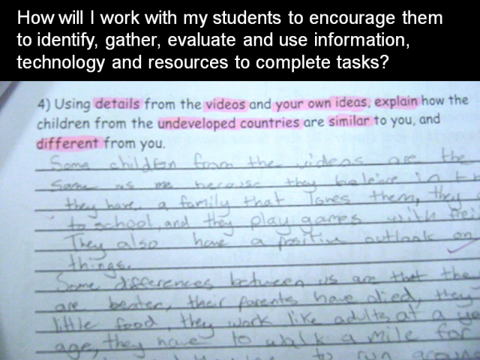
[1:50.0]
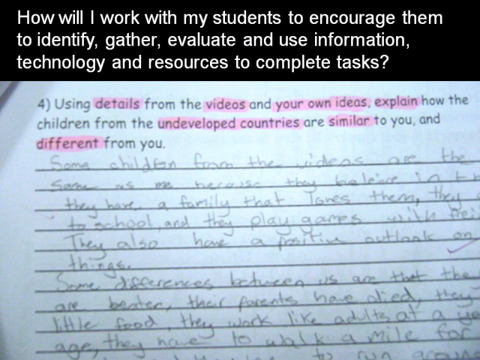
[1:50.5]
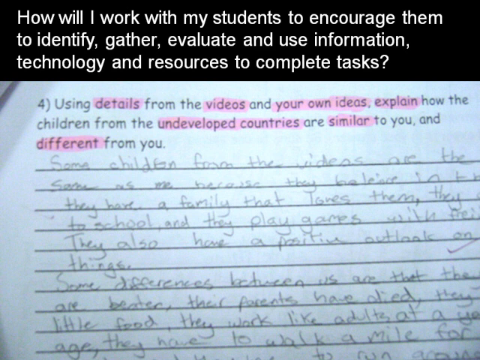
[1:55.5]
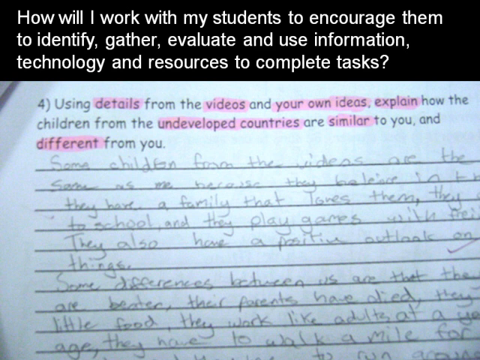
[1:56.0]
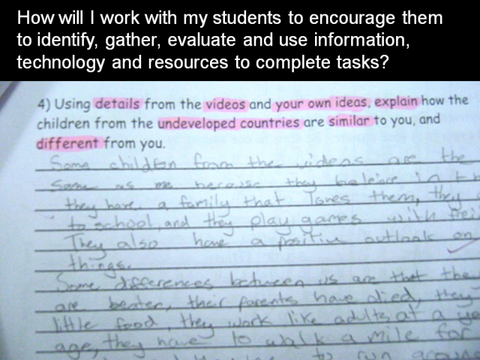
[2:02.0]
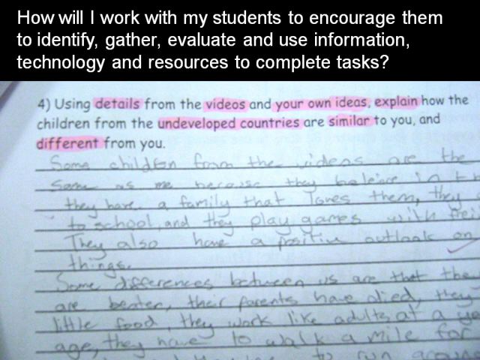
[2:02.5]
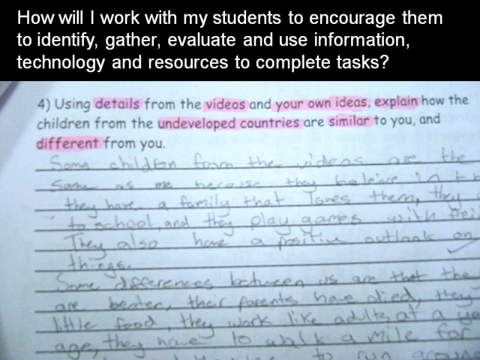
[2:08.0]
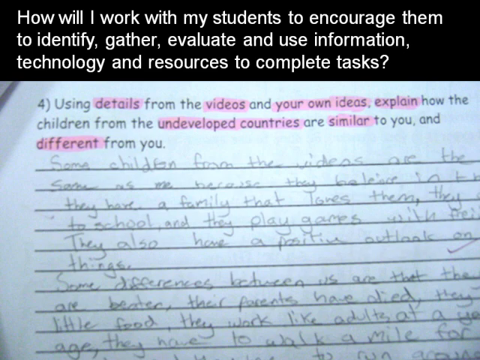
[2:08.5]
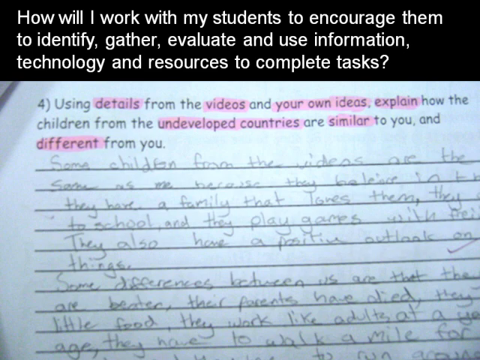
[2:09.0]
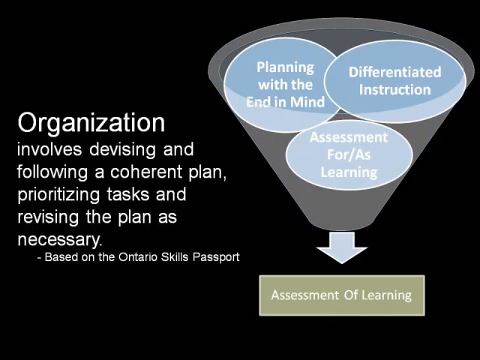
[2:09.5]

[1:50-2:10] A black rectangle at the top has white lettering that says "how will I work with my students to encourage them to identify, gather, evaluate, and use information, technology, and resources to complete tasks?" A question to a student reads "Using details from the videos and your own ideas, explain how the children from underdeveloped countries are similar to you and different from you." The child's answer is printed on the lines provided below the question. The screen then changes to a funnel-type chart that says "planning with the end in mind", a differentiated instruction item, and "assessment for" learning; the funnel leads down to an arrow and a rectangle reading "assessment of learning". Text says "organization involves devising and following a coherent plan, prioritizing tasks and revising the plan as necessary. Based on the Ontario Skills Passport."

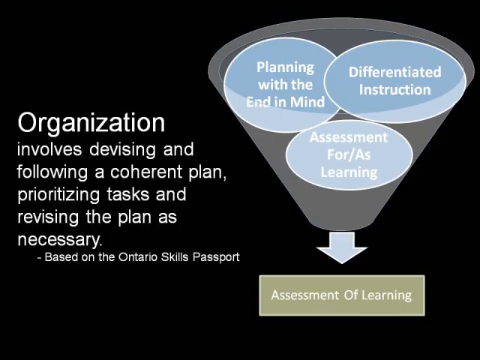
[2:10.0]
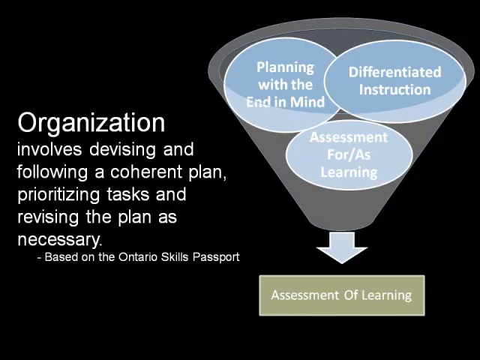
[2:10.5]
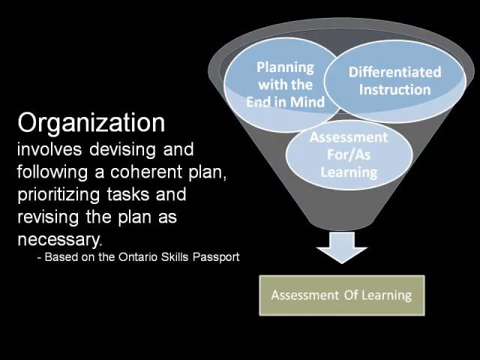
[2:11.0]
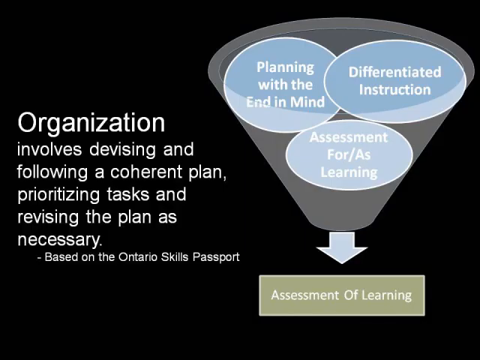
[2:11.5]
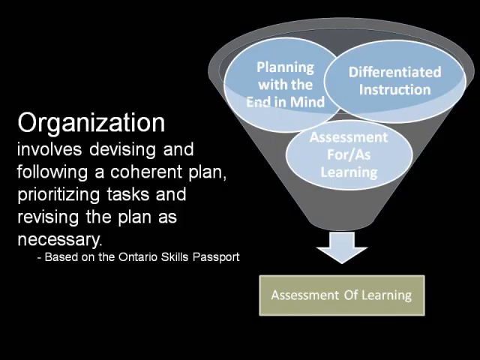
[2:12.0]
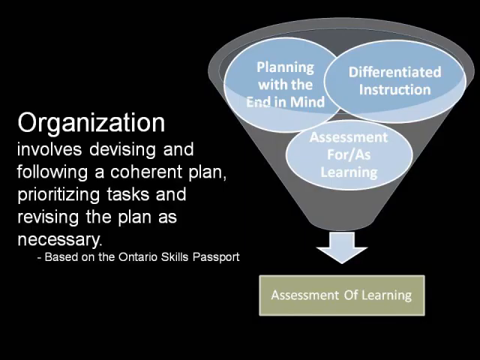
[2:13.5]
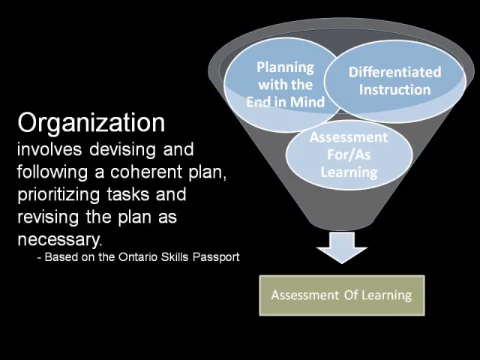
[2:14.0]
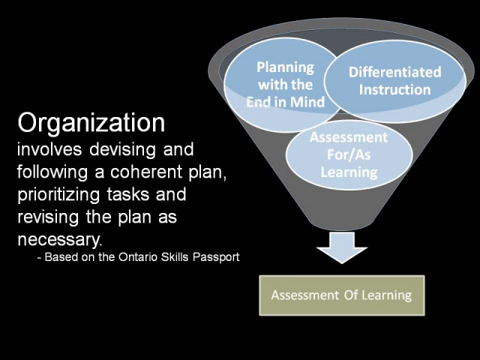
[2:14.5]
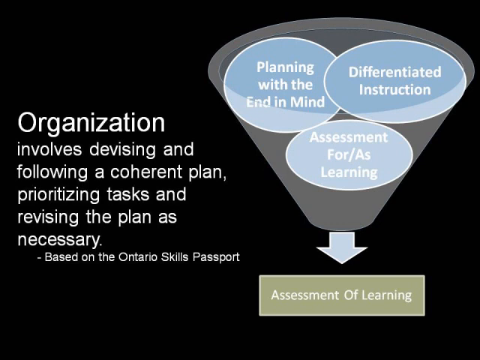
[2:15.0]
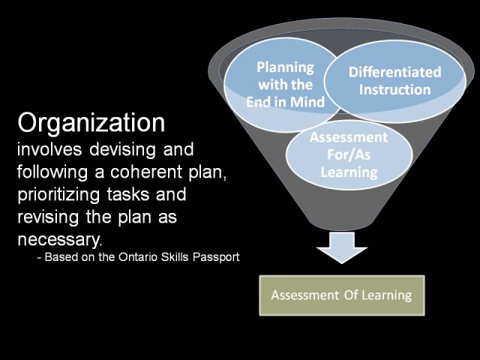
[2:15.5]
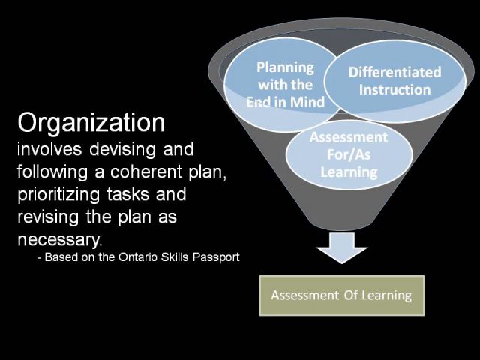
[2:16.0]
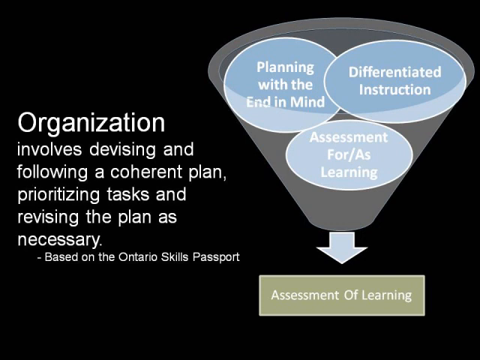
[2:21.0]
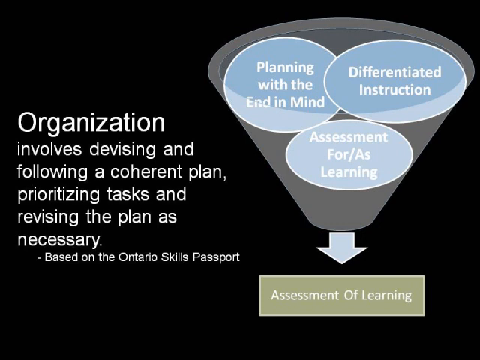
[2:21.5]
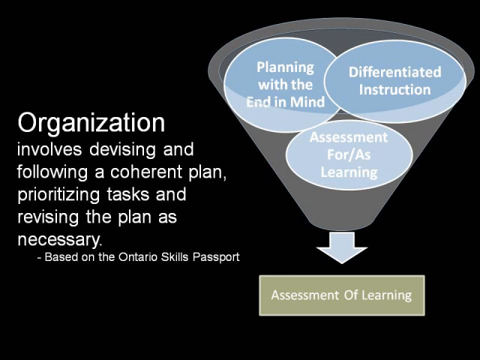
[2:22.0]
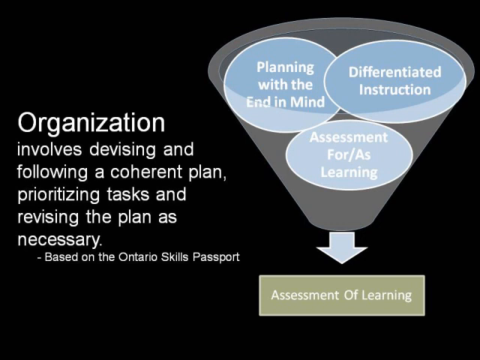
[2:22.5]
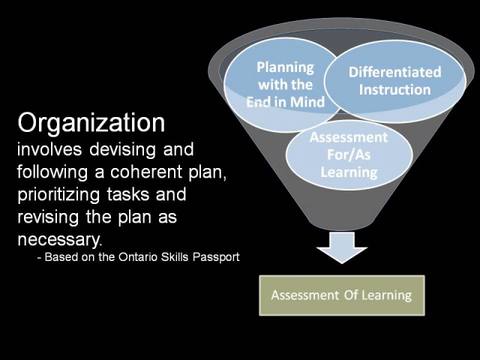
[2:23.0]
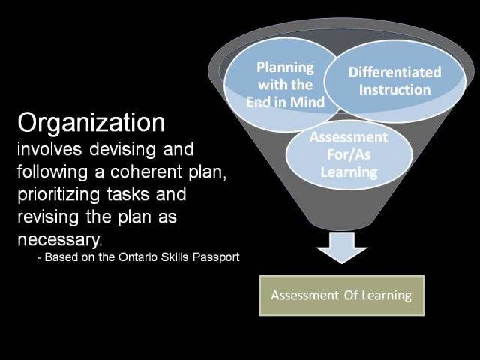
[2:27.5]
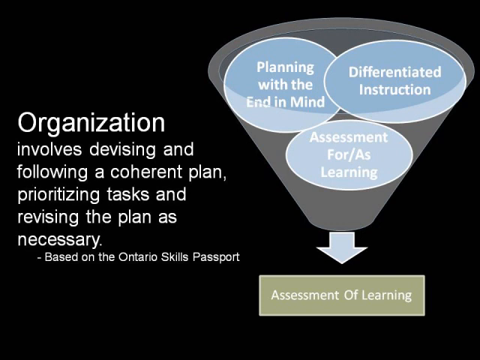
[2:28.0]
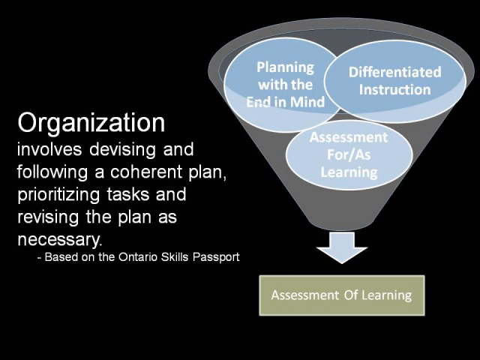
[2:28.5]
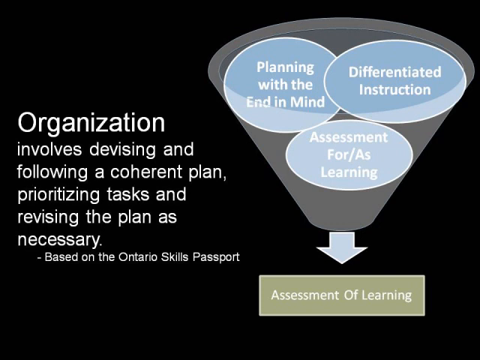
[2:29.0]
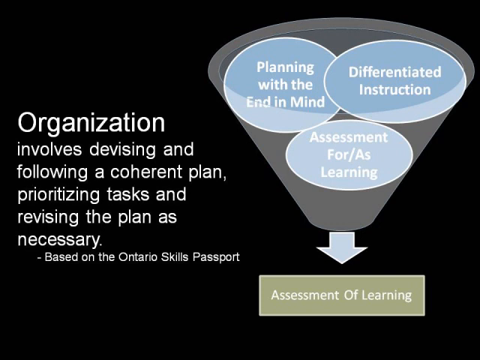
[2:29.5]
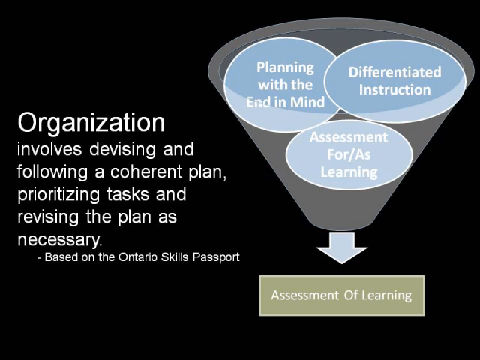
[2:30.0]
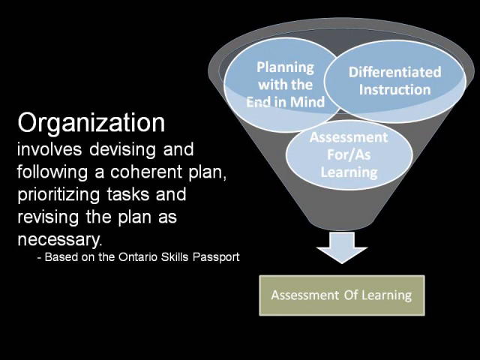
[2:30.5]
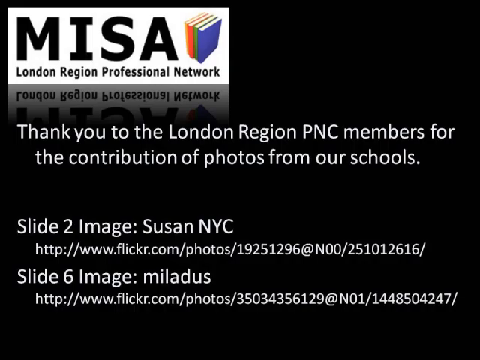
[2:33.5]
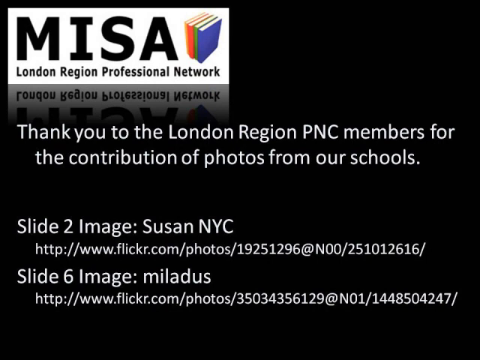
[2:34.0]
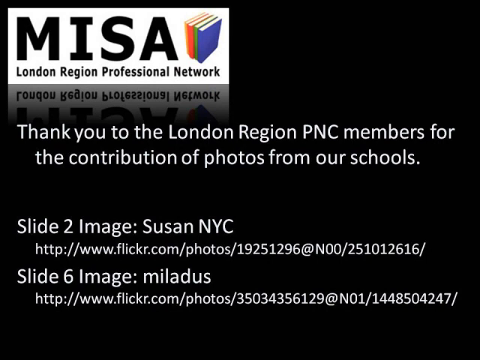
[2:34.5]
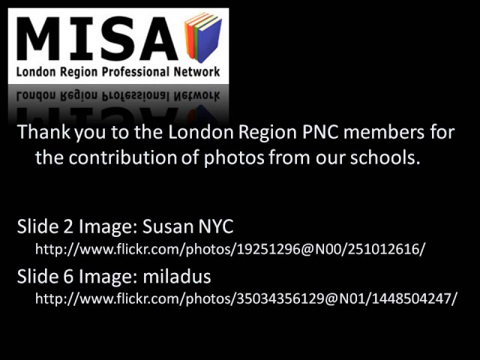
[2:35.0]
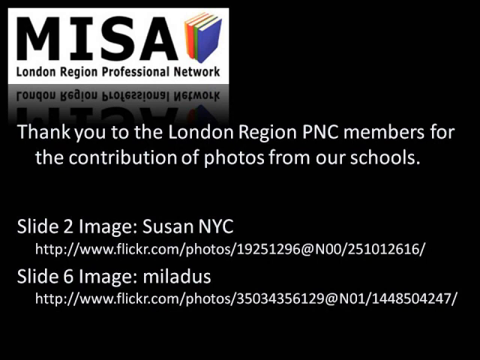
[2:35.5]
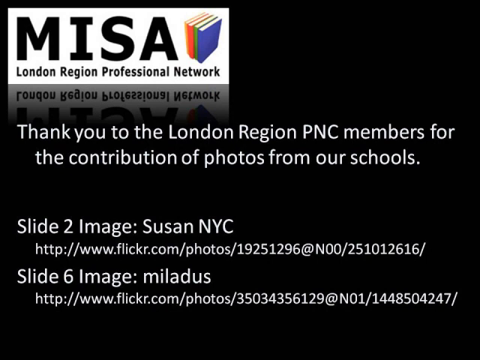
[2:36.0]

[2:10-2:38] On a black background with white lettering, a gray funnel on the right-hand side has blue drops going down it with different words written in them. One circular droplet says "planning with the end in mind", another says "differentiated instruction", and the last says "assessment for" learning. The funnel leads down to an arrow that points at a rectangular button that says "assessment of learning". White text on the left says "organization involves devising and following a coherent plan, prioritizing task and devising the plan as necessary based on the Ontario skills passport." The screen then shows the MISA (M-I-S-A) logo and "London Region Professional Network" on the left, followed by credits: "slide 2 image" with susan NYC and a website URL, then "slide 6 image" with miladus and a website URL below it.